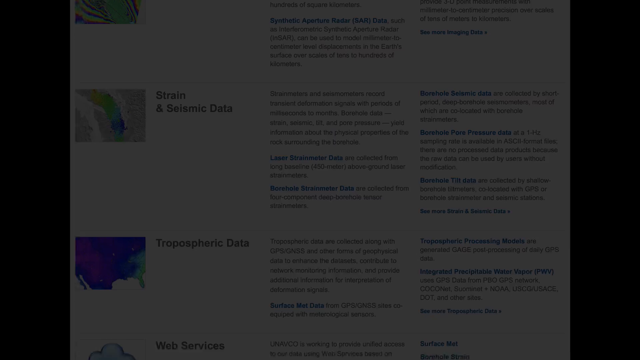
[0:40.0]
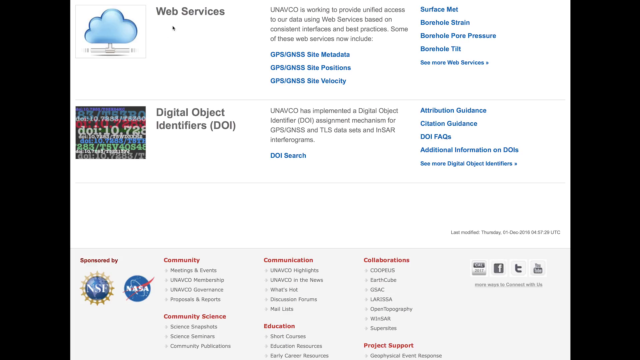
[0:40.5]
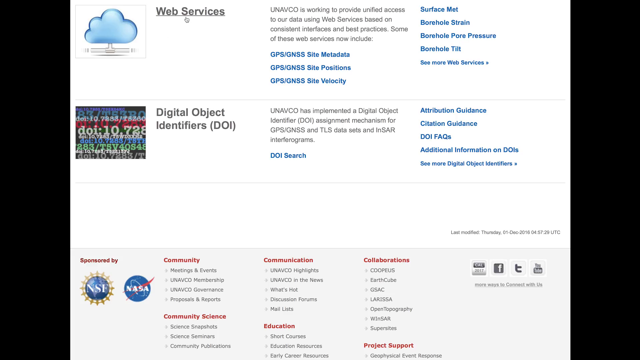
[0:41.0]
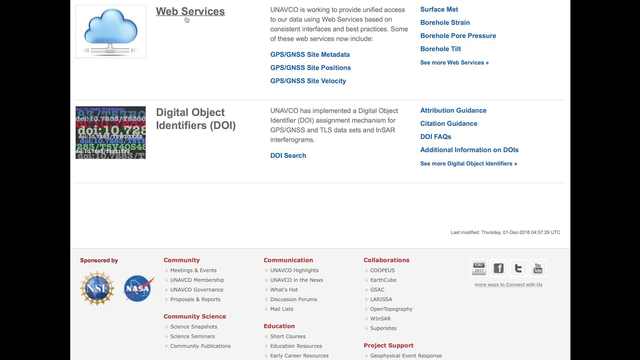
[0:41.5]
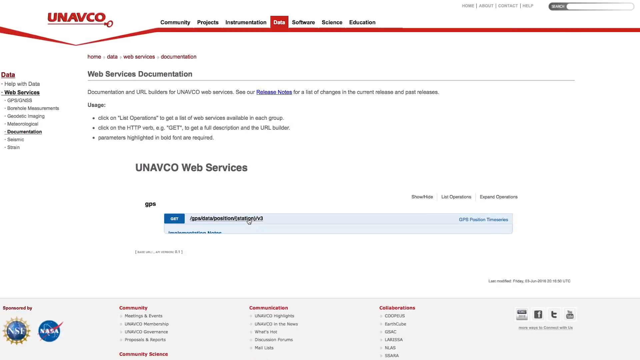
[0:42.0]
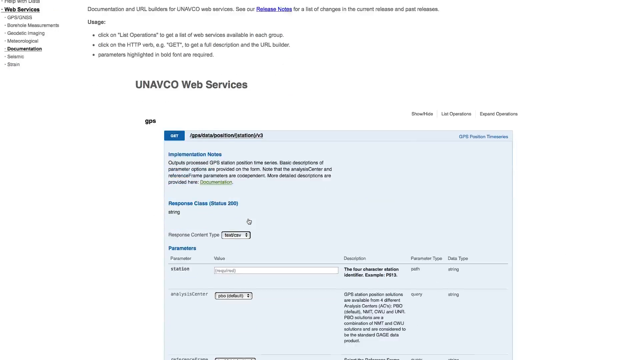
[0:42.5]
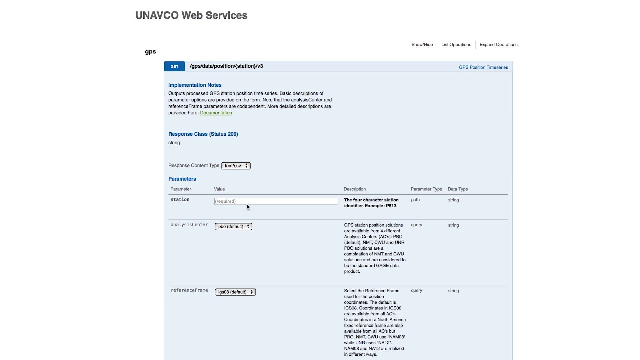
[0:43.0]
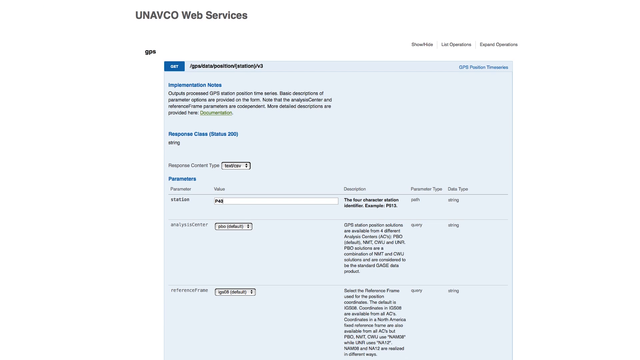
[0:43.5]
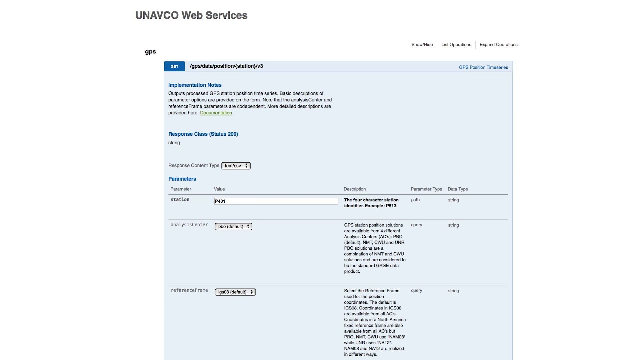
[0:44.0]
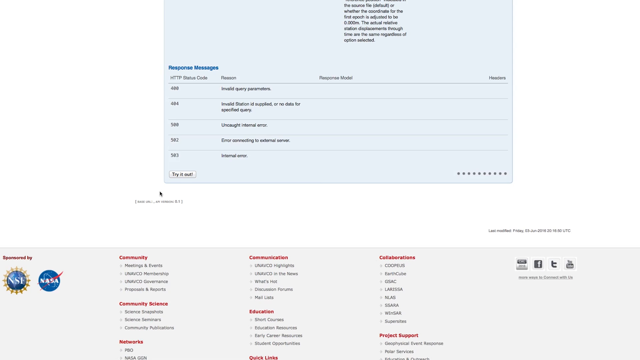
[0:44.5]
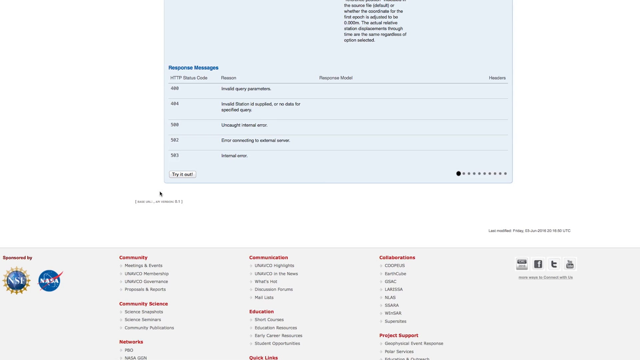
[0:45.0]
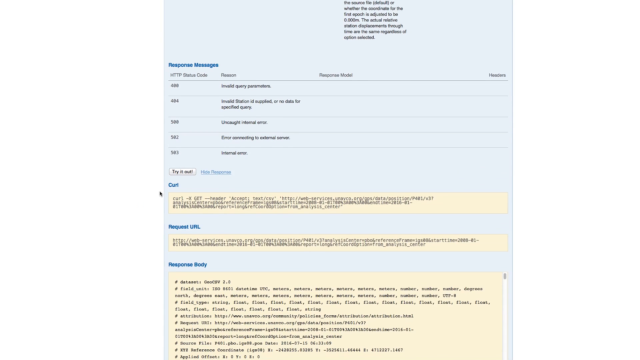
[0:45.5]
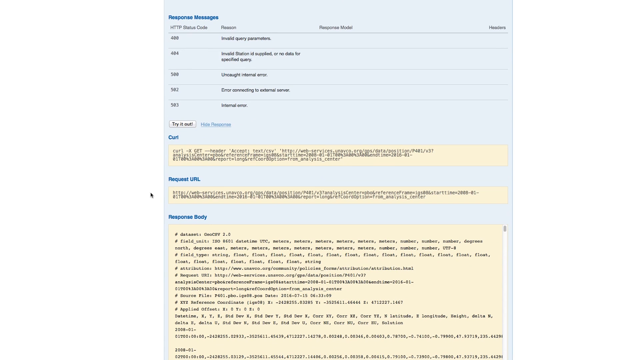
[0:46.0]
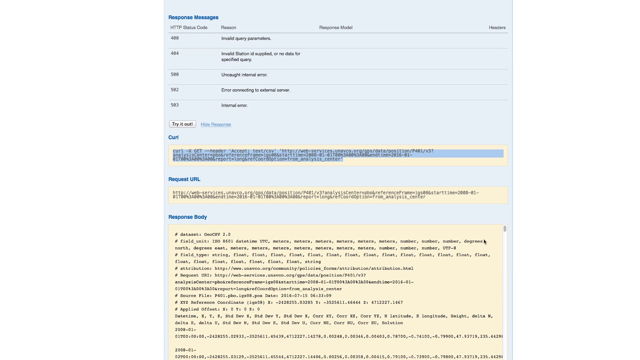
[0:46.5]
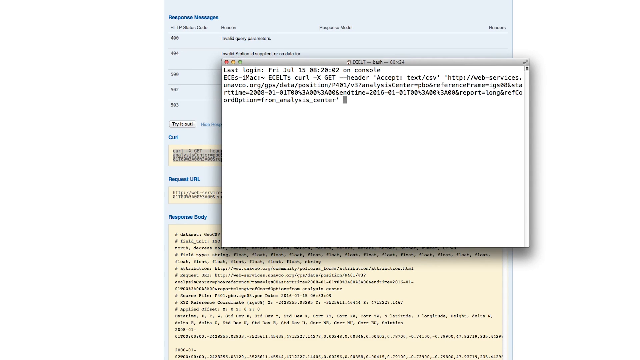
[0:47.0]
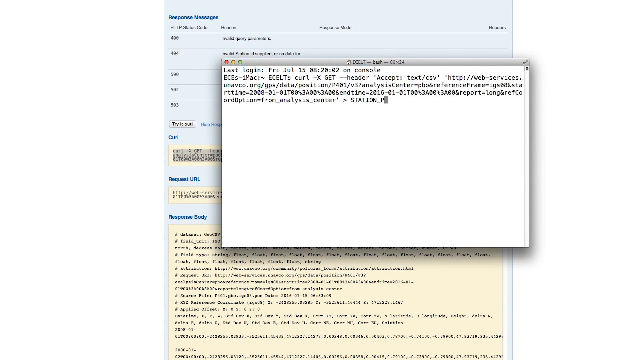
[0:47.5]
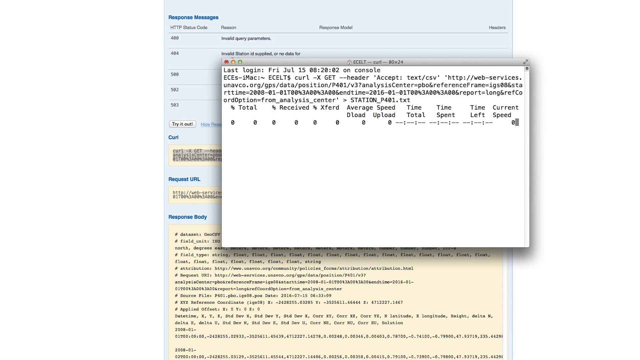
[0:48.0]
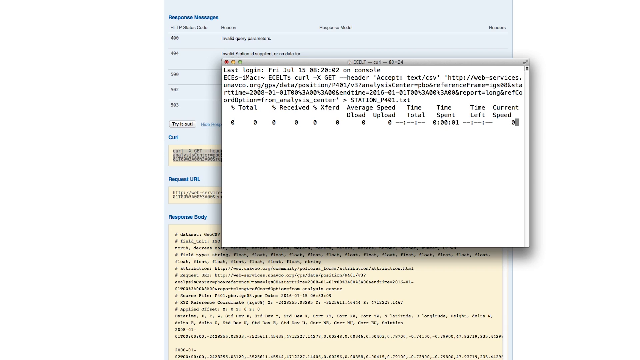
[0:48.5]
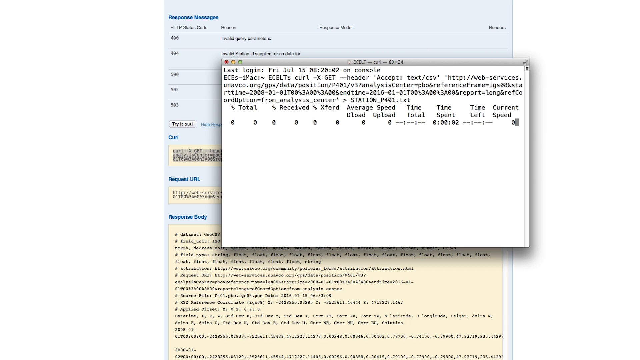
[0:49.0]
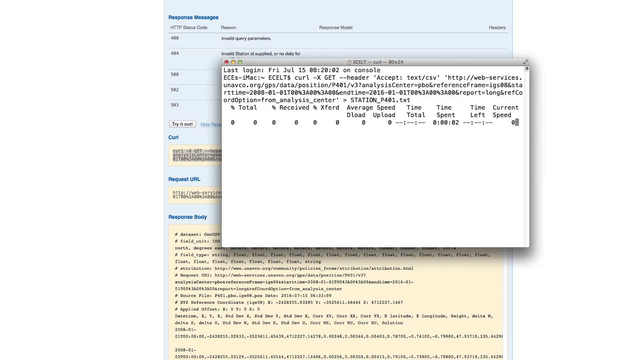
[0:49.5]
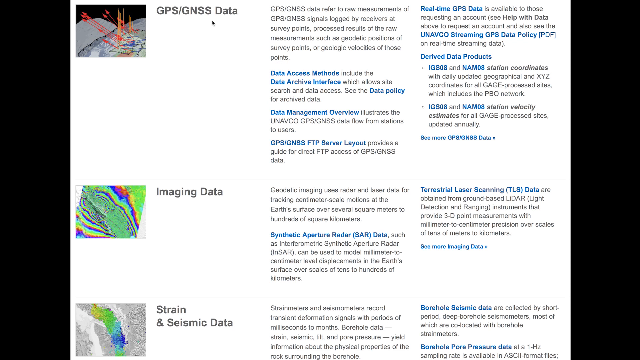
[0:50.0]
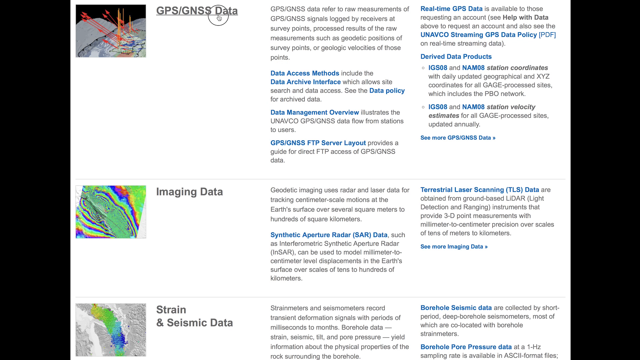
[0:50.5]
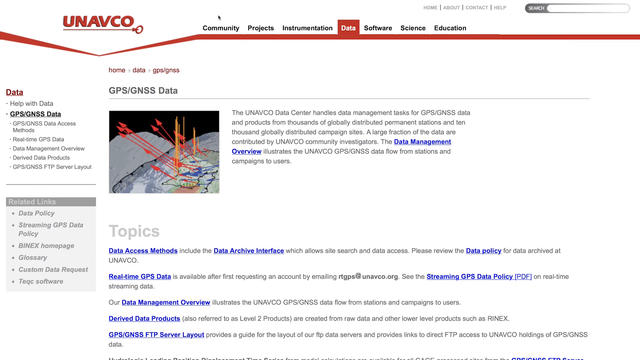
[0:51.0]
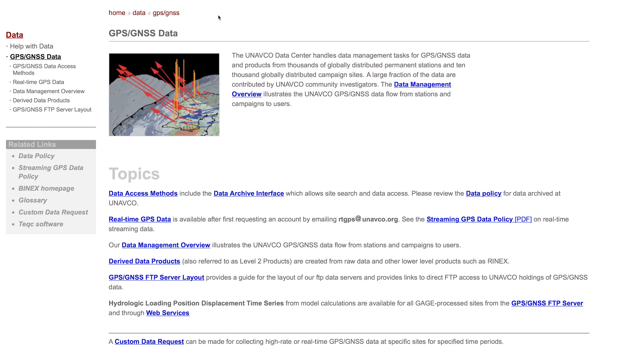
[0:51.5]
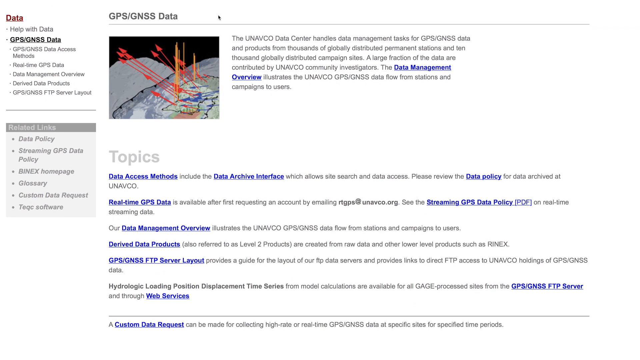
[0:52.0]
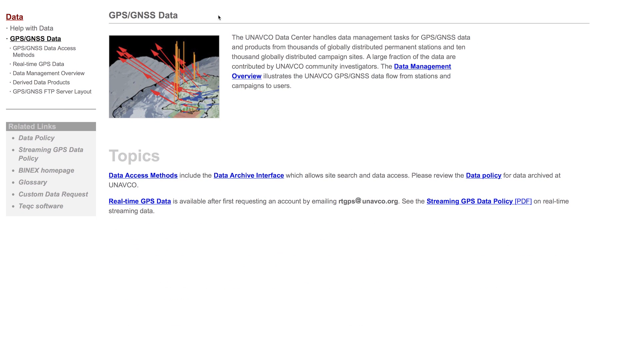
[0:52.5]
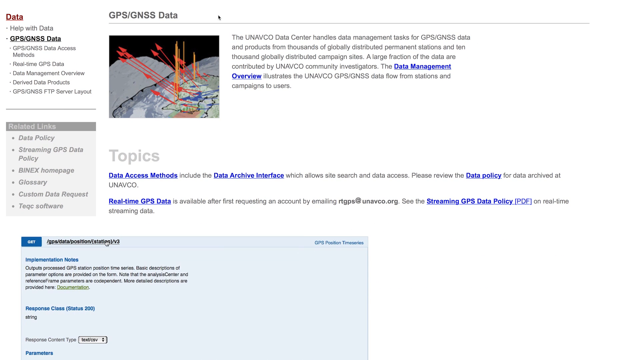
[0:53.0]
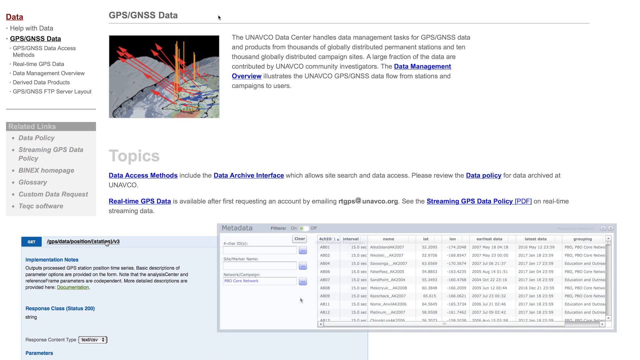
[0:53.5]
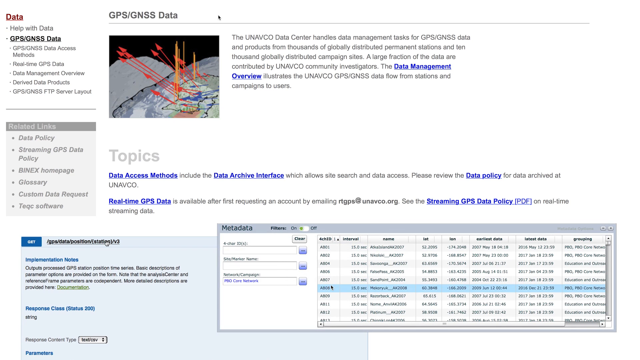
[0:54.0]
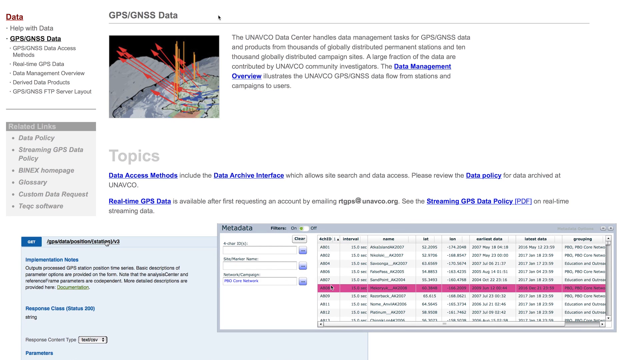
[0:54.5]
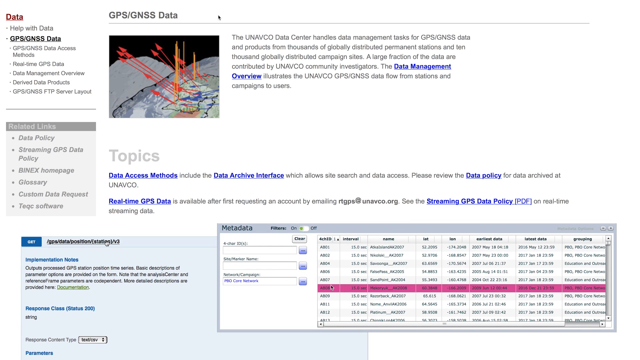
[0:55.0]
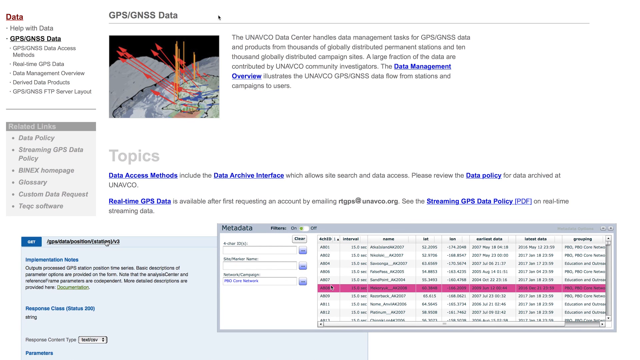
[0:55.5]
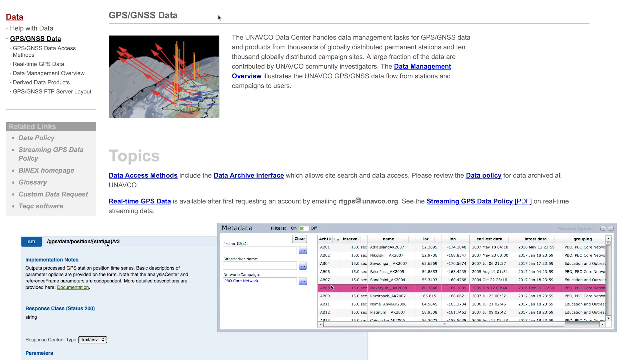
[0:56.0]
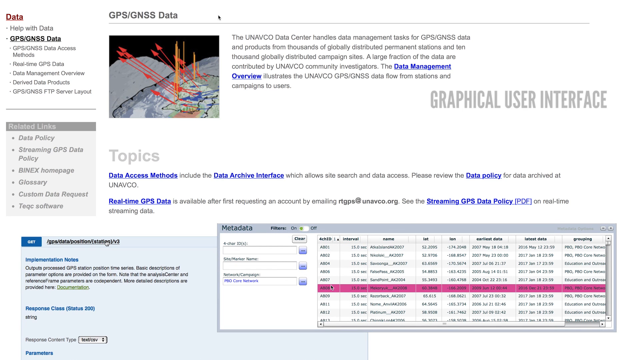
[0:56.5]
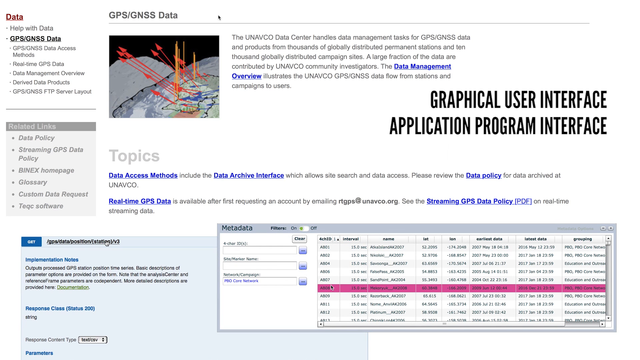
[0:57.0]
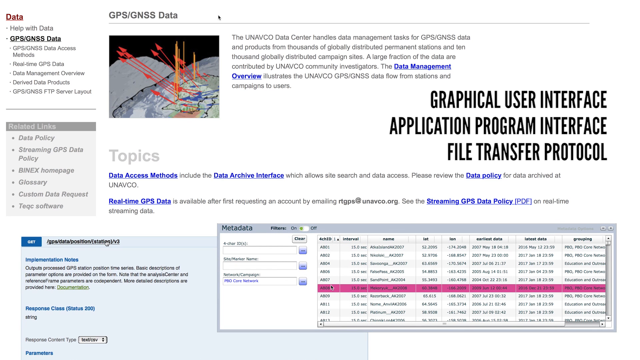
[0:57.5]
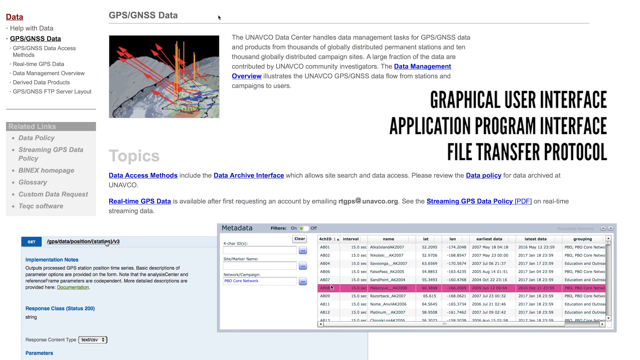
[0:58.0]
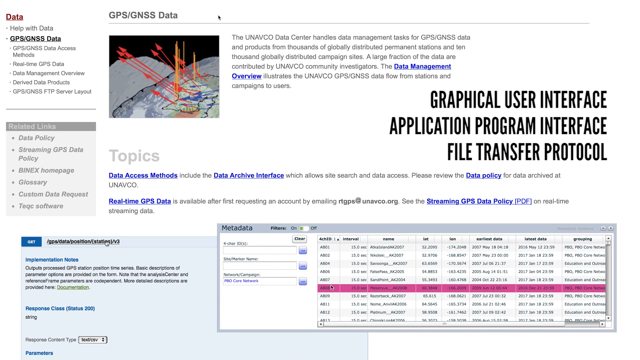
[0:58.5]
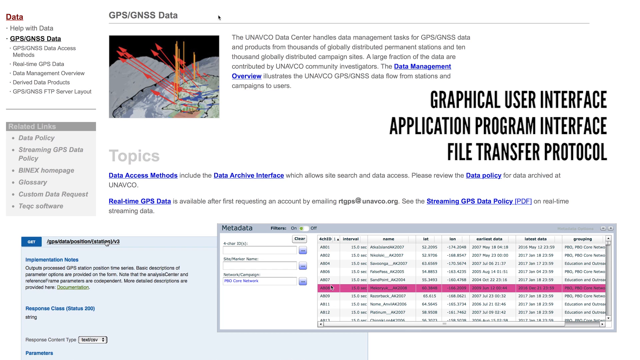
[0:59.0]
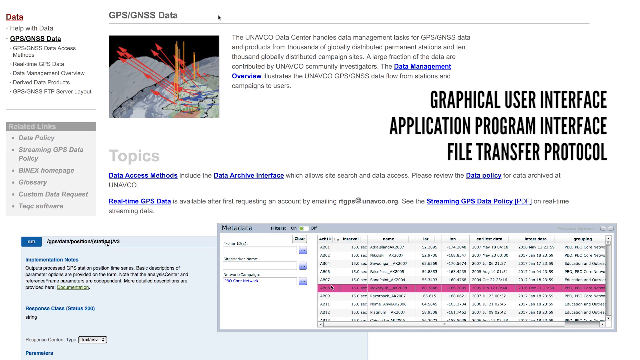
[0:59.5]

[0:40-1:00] What is apparently the Univoco website shows a large blue cloud at the top with the words "Web Services" and the text "Univoco is working to provide unified access to our data using web services based on consistent interfaces and best practices. Some of these web services now include the GPS and GNSS site metadata, the GPS GNSS site positions, the GPS GNSS site velocity." To the right are "surface met", "borehole strain", "borehole pore pressure" and "borehole tilt". Underneath is "digital object identifiers" with the text "Univoco has implemented a digital object identifier assignment mechanism for GPS, GNSS, and TLS data sets and NSAR interferograms."